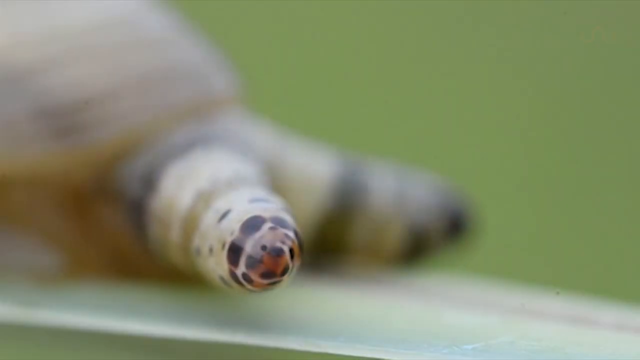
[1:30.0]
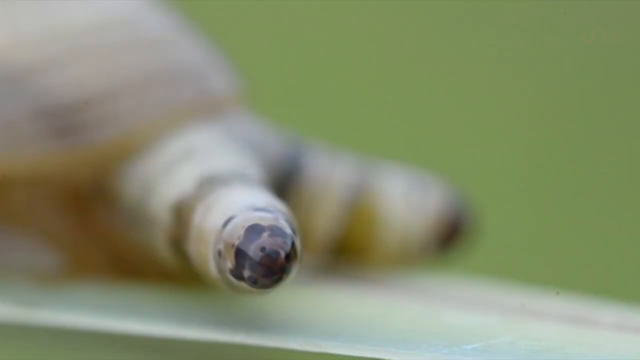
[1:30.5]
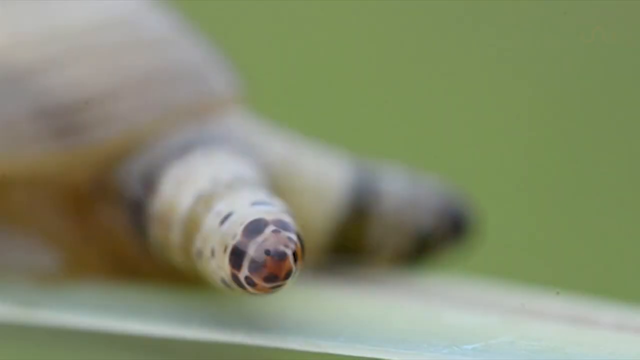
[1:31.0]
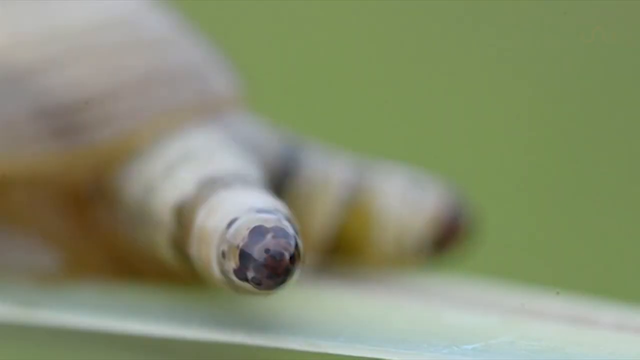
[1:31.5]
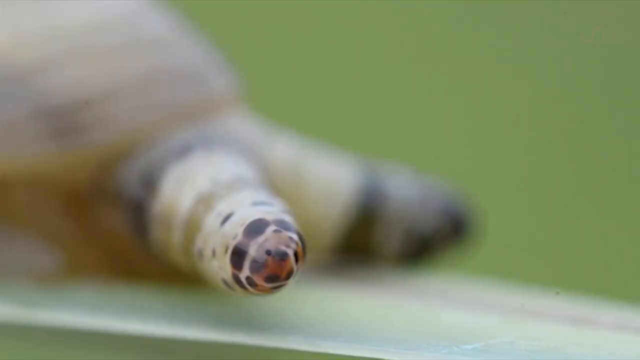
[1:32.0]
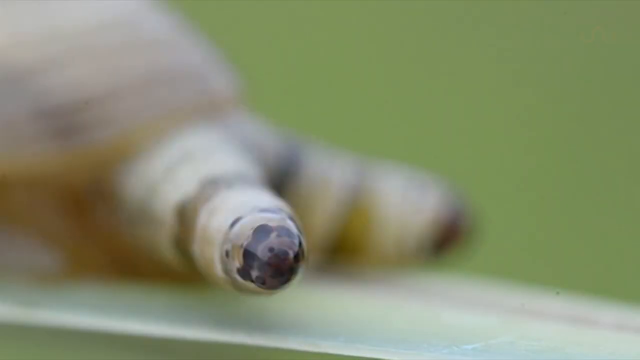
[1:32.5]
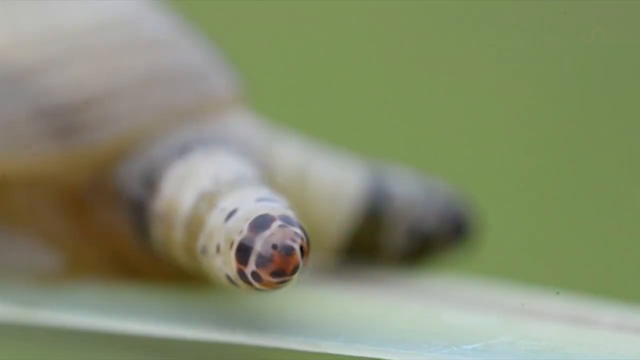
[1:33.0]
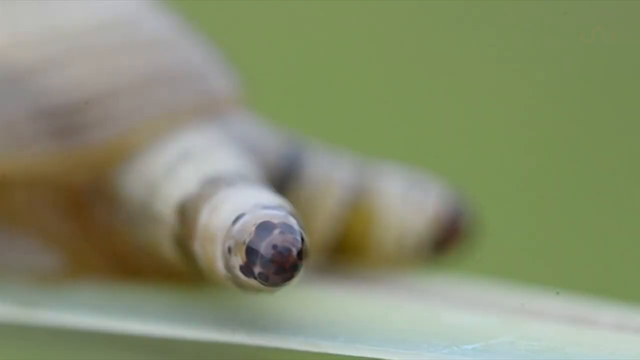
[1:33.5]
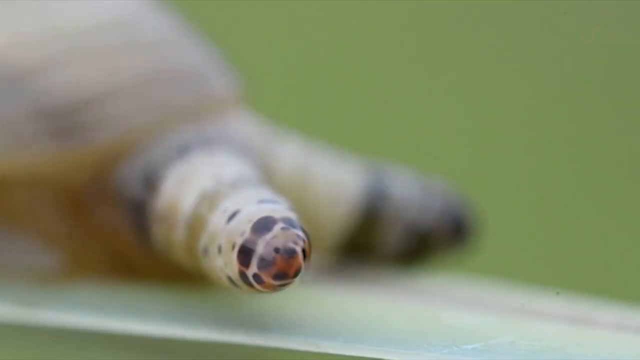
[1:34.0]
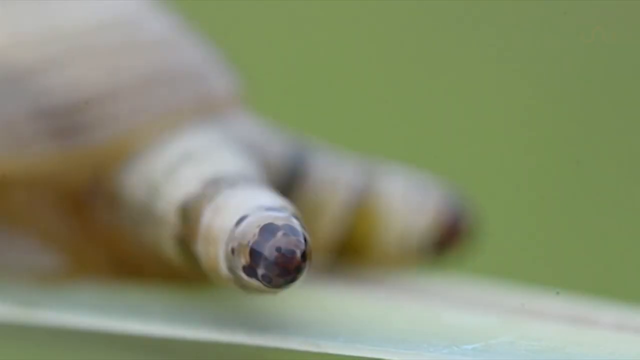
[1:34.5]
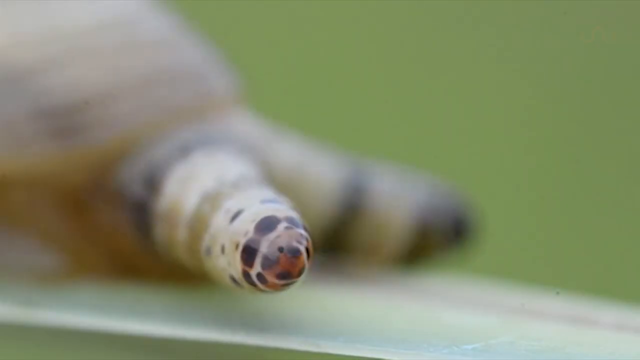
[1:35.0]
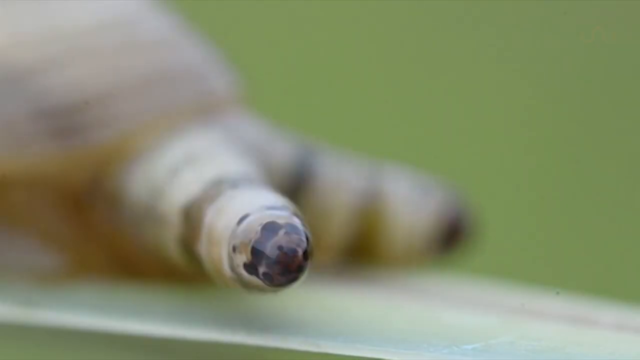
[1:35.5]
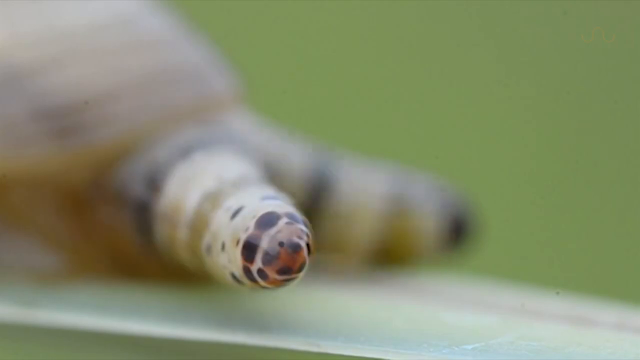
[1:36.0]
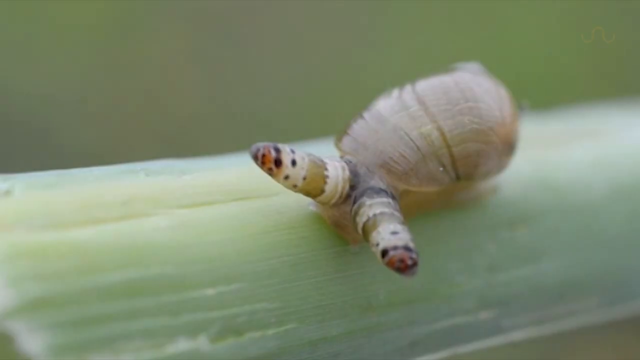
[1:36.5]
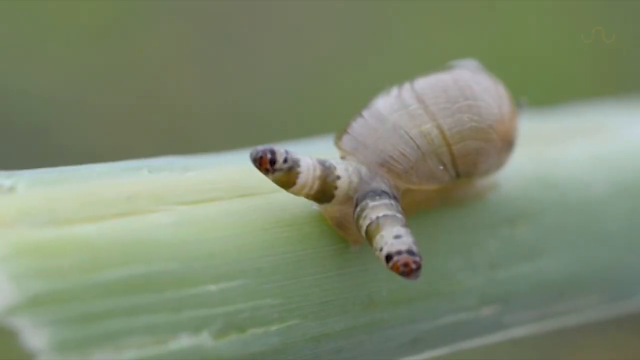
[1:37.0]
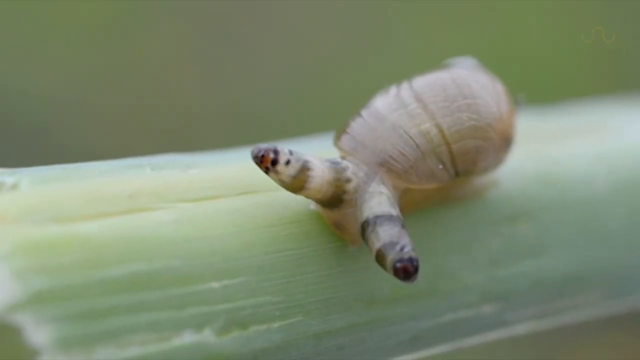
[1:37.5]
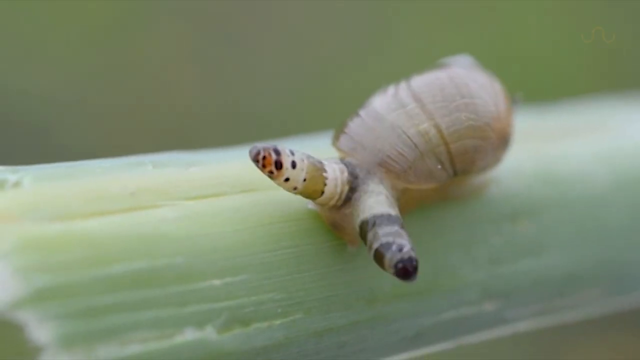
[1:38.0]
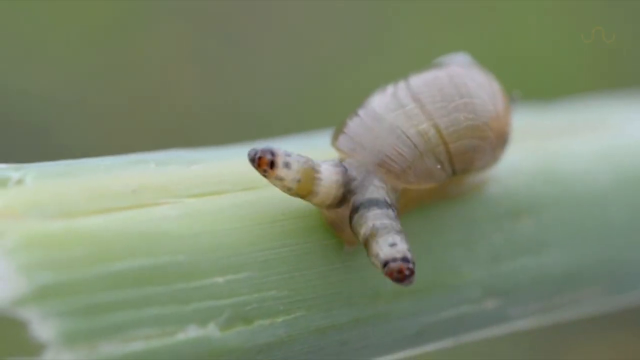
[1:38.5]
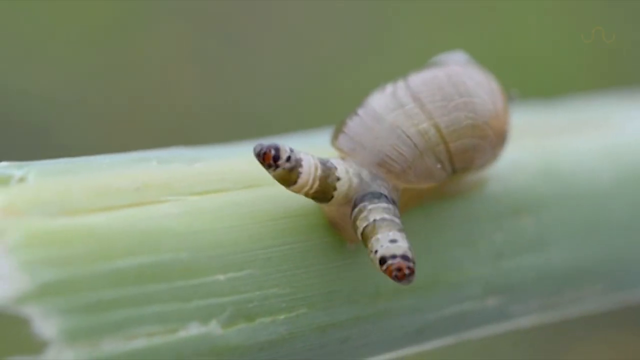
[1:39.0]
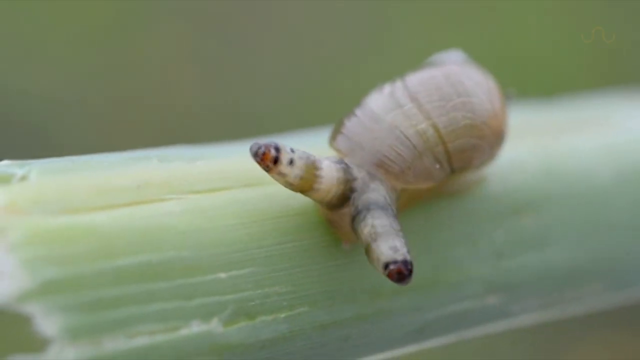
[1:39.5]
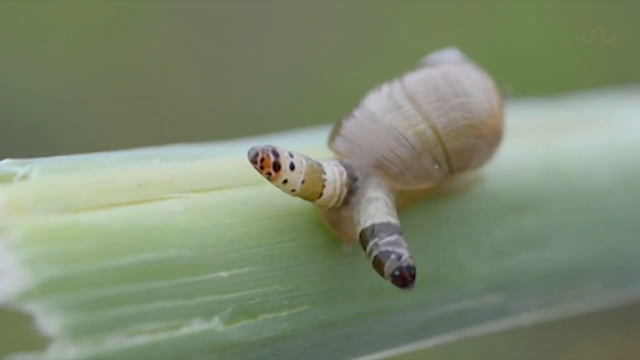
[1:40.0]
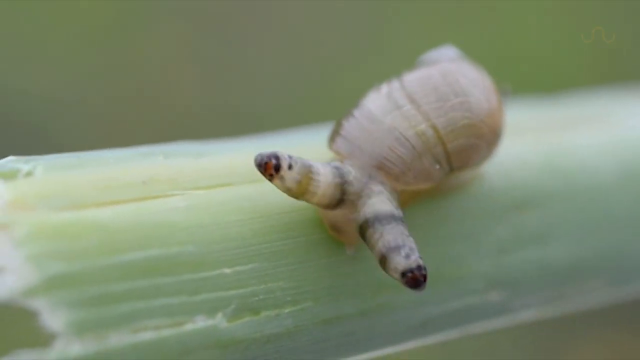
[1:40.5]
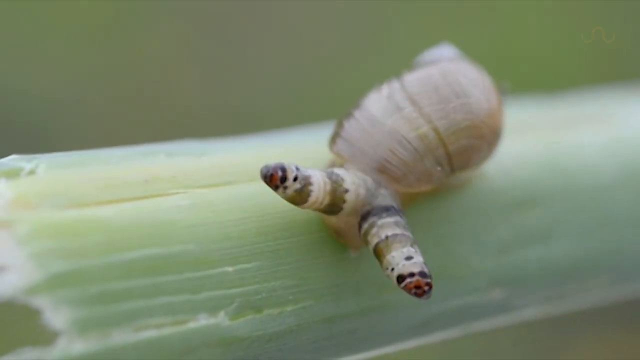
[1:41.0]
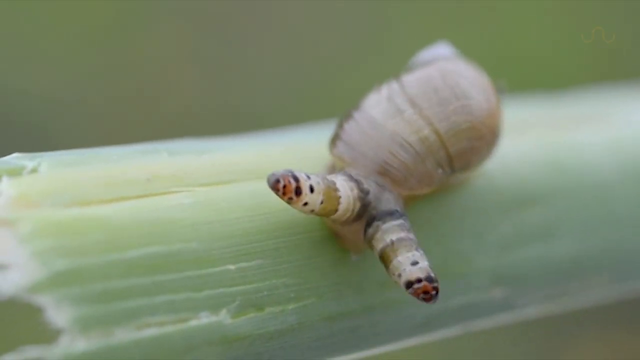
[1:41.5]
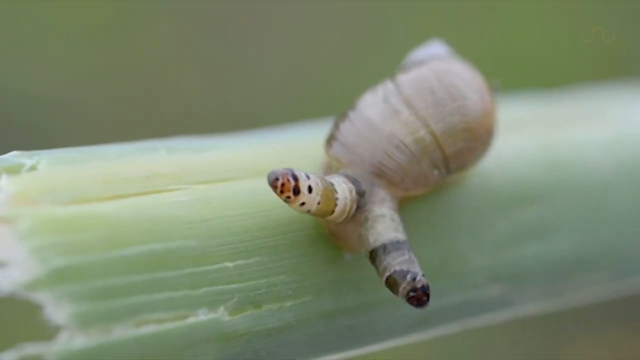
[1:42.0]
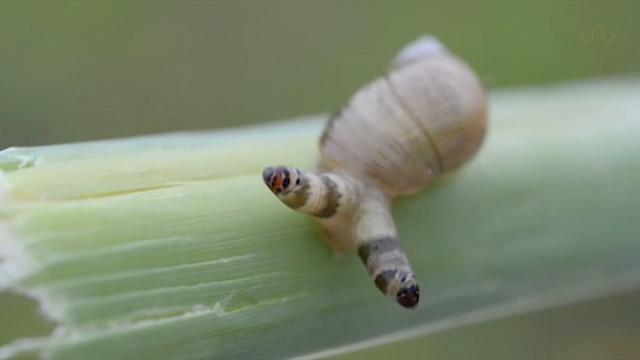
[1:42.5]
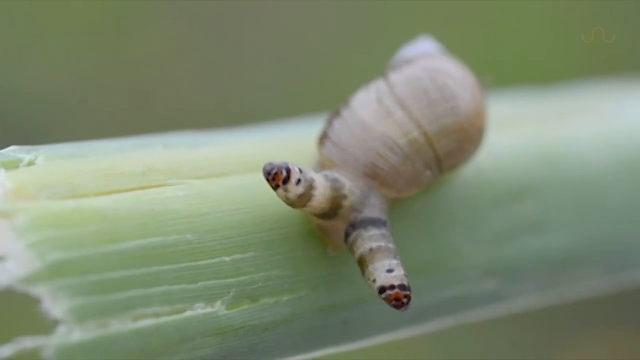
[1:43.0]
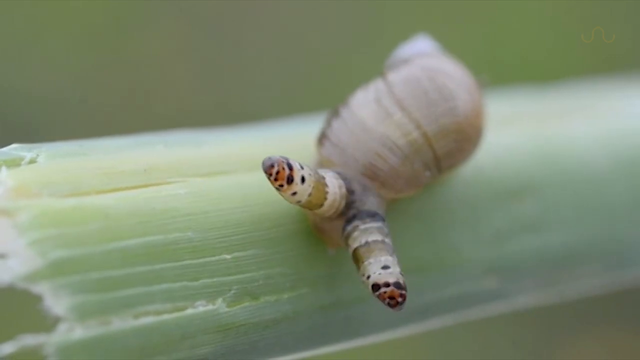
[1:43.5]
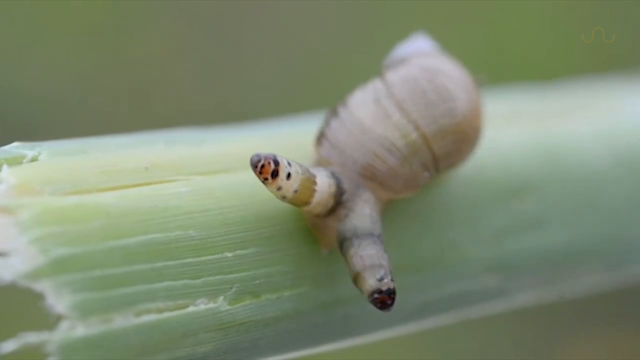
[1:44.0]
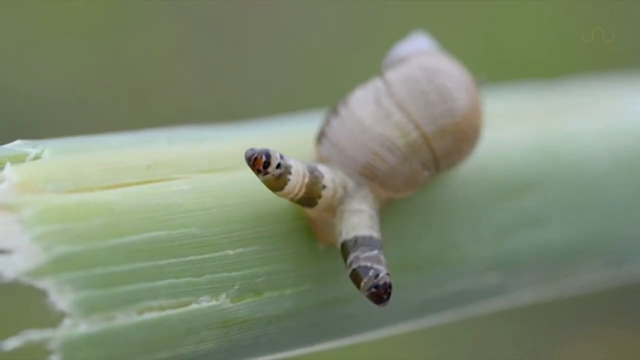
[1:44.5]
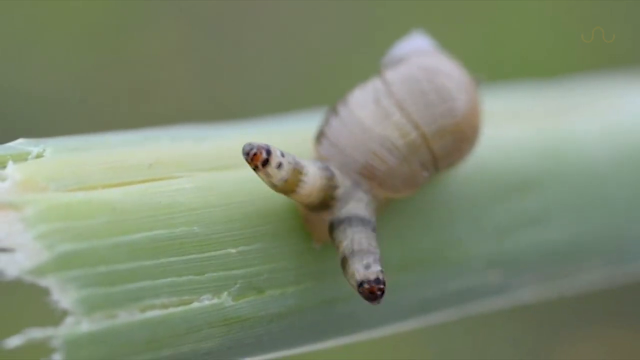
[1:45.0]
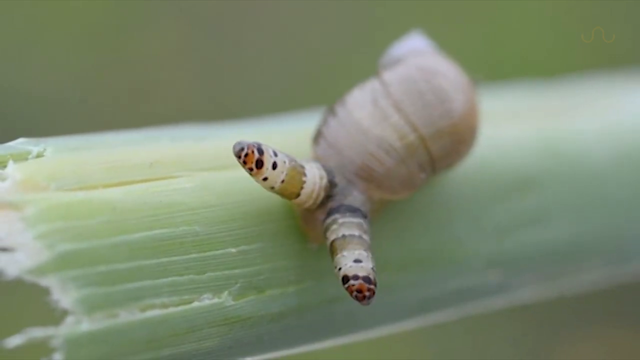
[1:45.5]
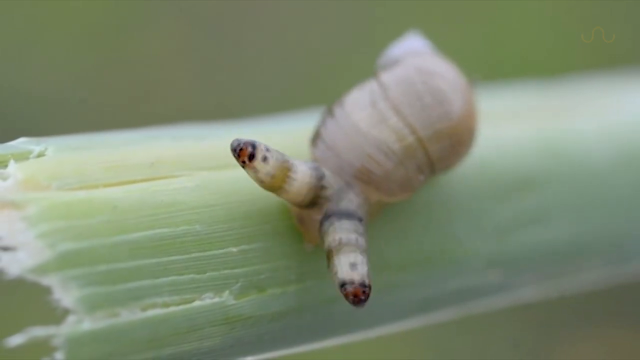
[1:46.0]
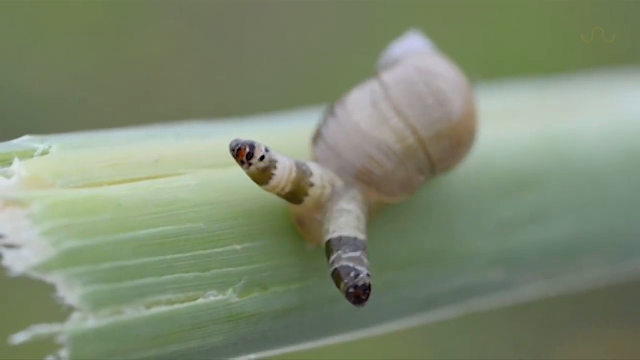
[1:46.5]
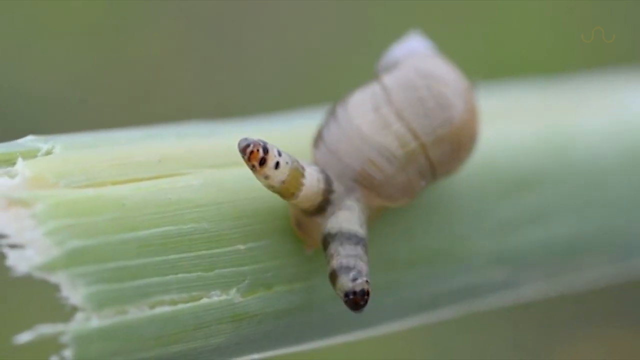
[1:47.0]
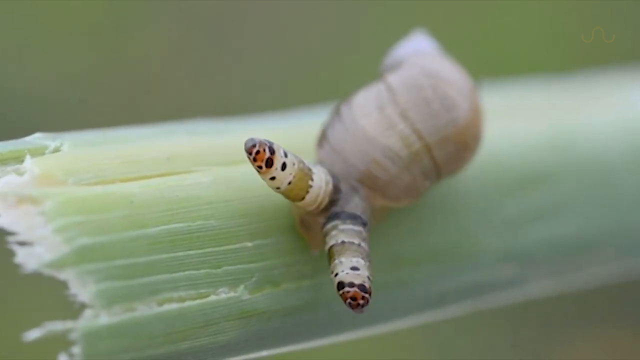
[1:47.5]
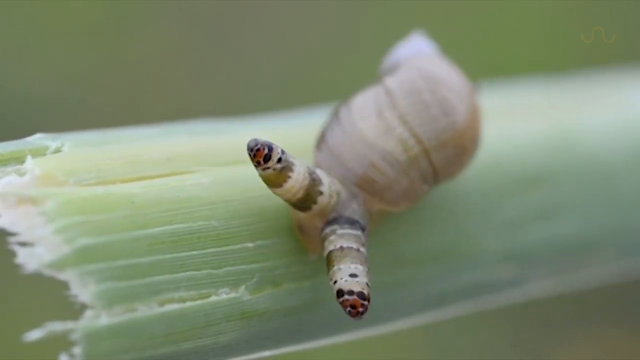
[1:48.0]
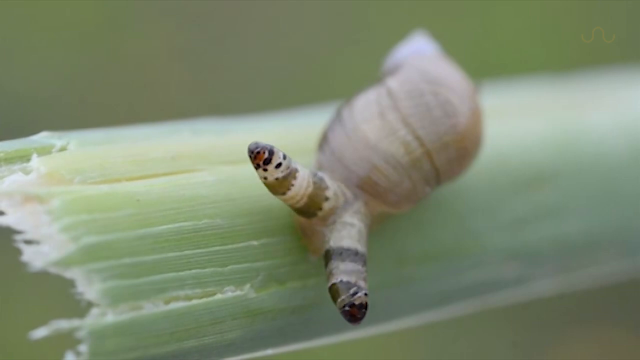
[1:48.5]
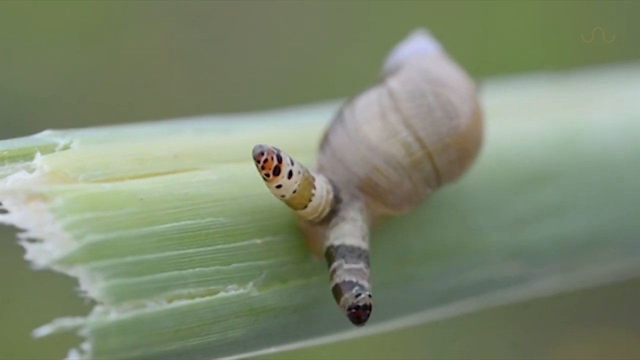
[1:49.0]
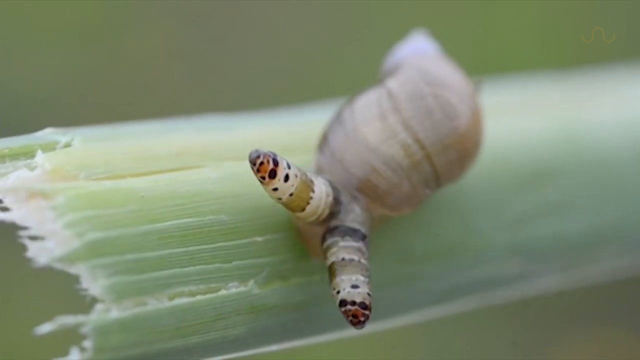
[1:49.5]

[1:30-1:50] A snail-like creature has two antennae pointing toward the middle and toward the upper right. Their base parts sink into the body and come back out, again and again. The lower, snail-like part of the body is also moving, so the creature moves along a green stalk, heading toward the bottom of that section. The tips of the antennae are more brown, with possibly darker black dots. As the antennae go down toward the body, those areas stretch, growing bigger or smaller as they go back. The background is a somewhat blurry green, with the focus on the details of the antennae.